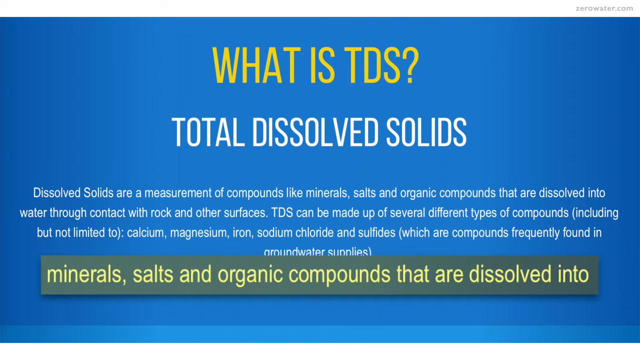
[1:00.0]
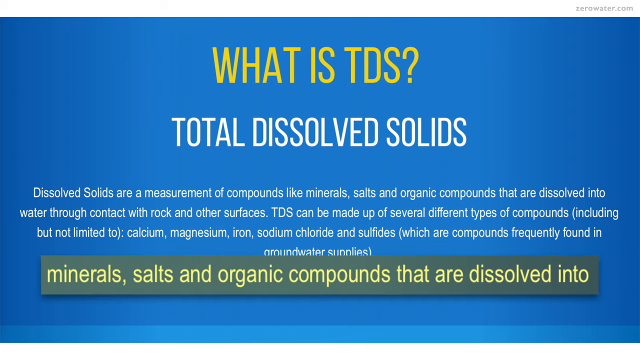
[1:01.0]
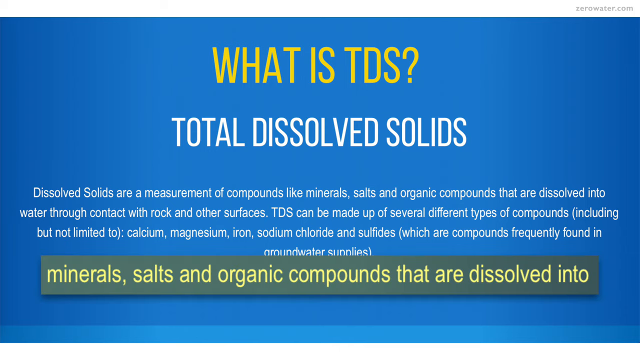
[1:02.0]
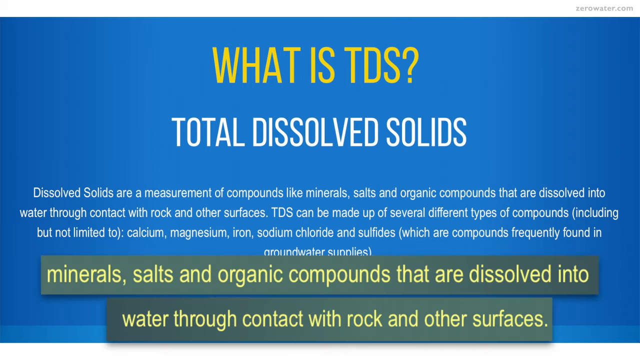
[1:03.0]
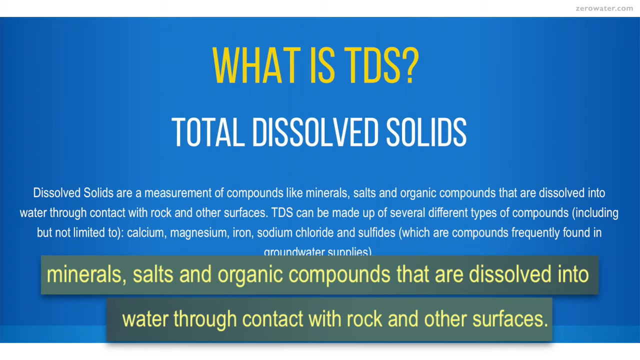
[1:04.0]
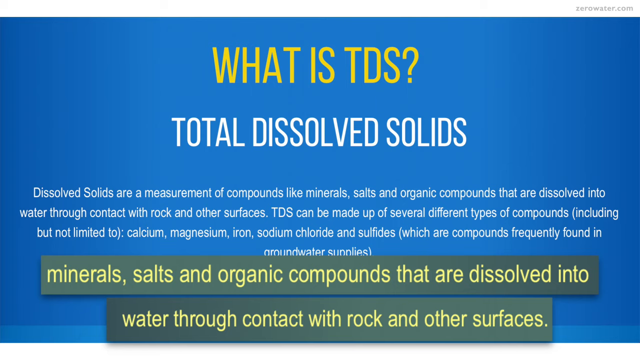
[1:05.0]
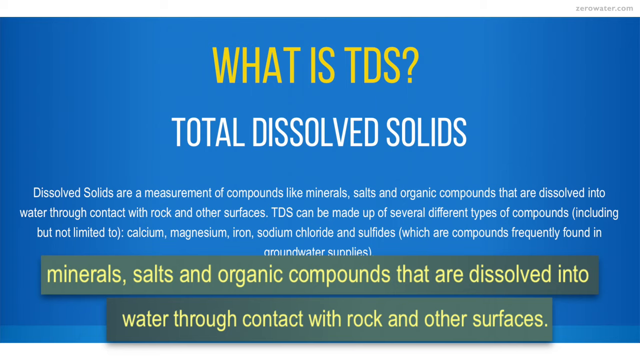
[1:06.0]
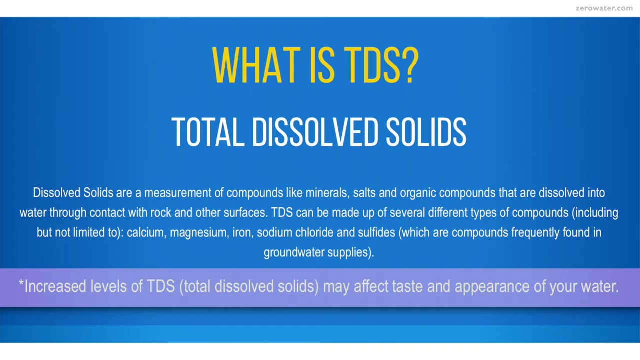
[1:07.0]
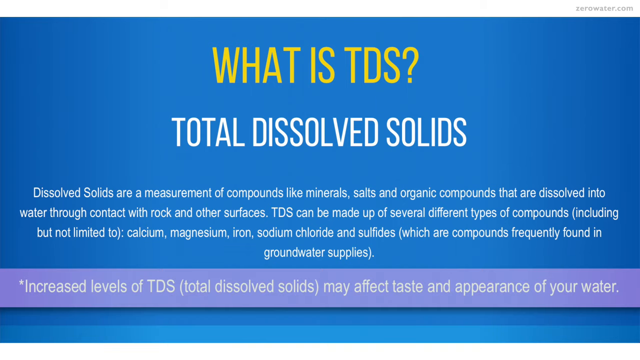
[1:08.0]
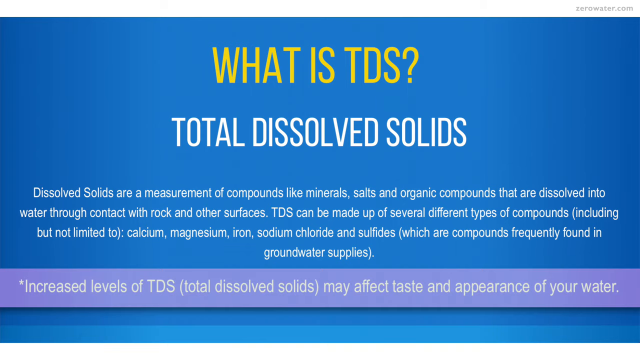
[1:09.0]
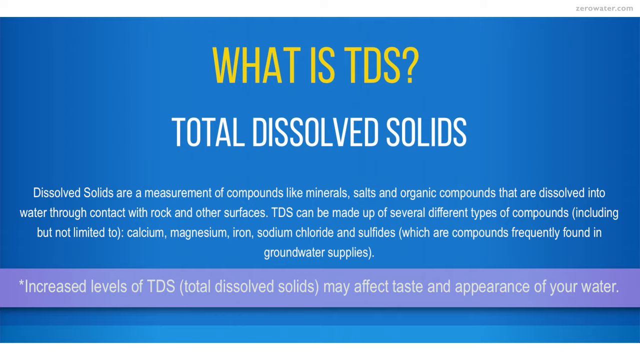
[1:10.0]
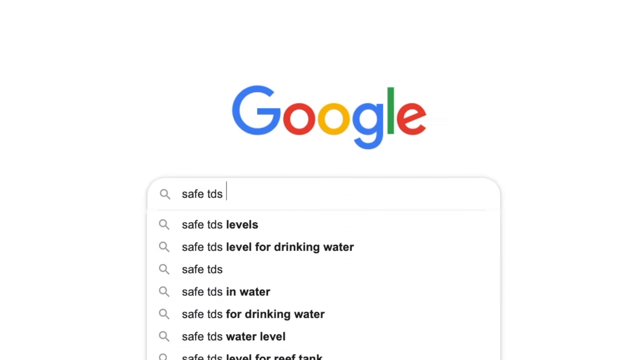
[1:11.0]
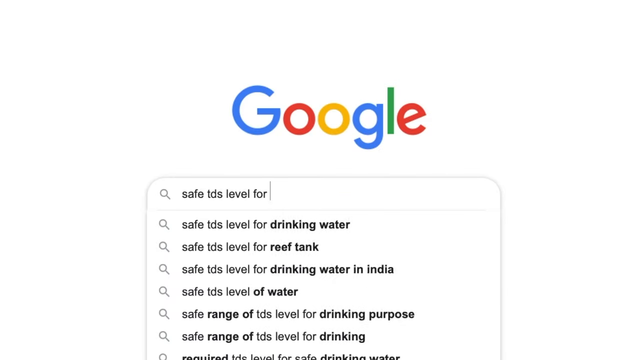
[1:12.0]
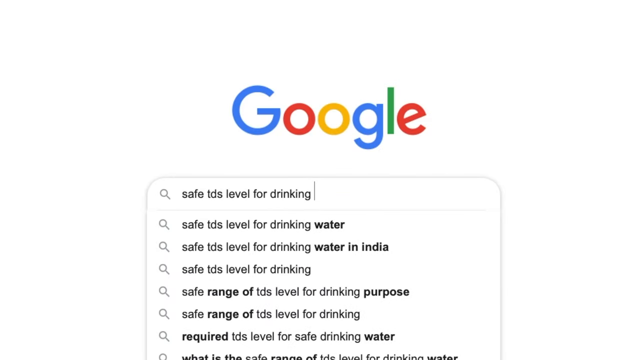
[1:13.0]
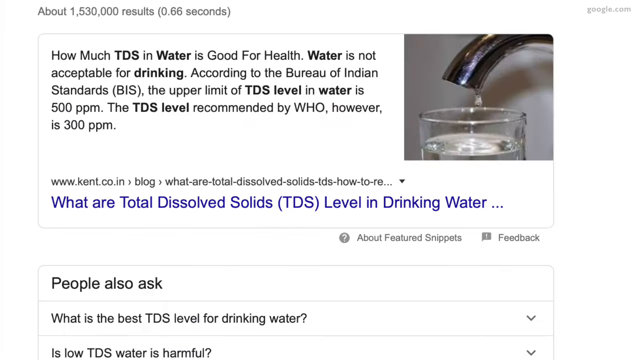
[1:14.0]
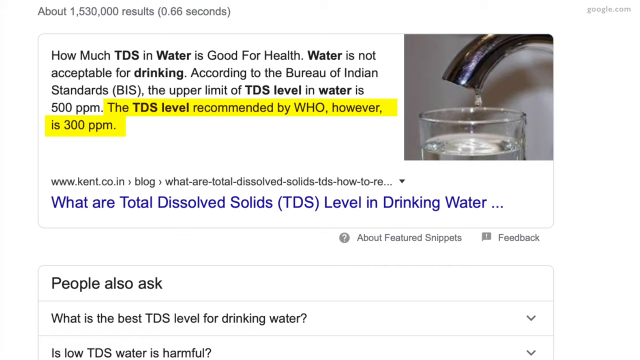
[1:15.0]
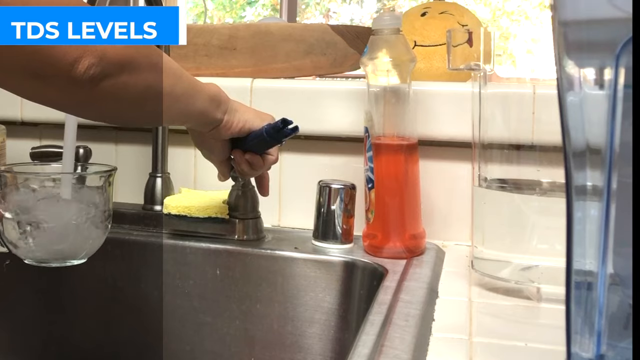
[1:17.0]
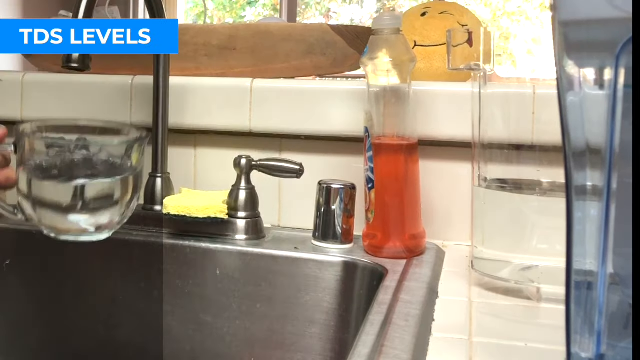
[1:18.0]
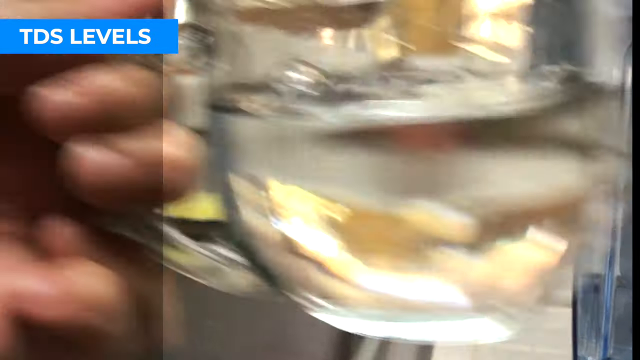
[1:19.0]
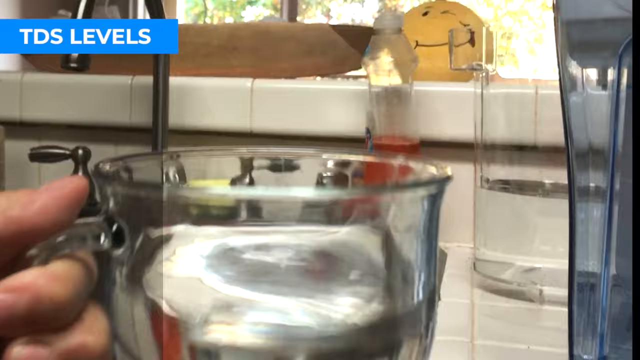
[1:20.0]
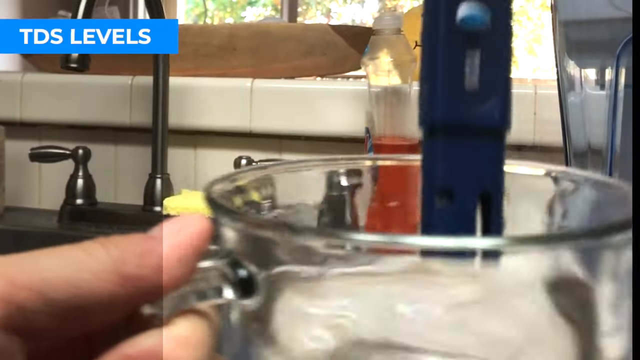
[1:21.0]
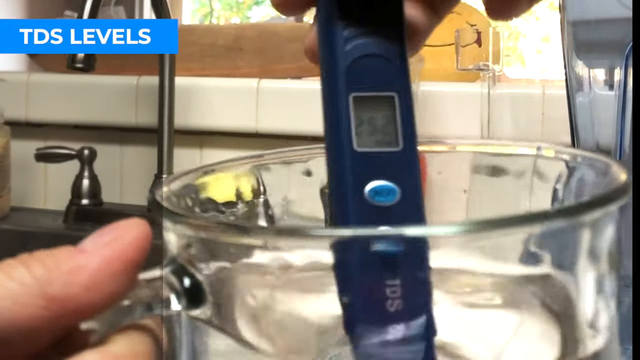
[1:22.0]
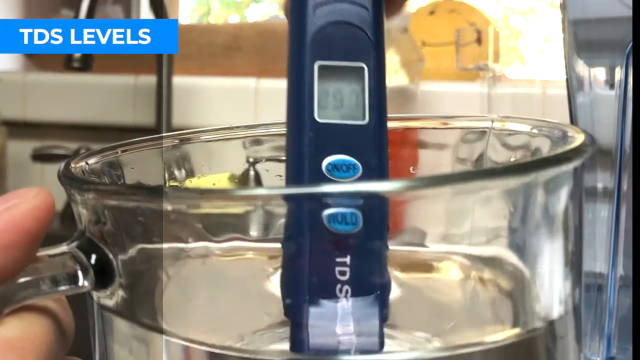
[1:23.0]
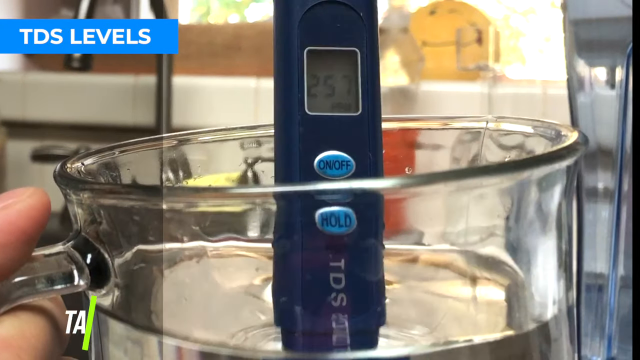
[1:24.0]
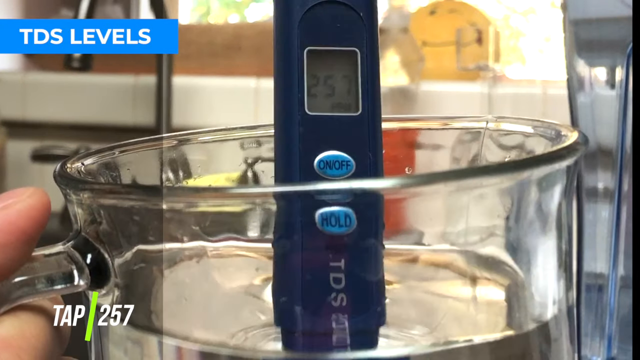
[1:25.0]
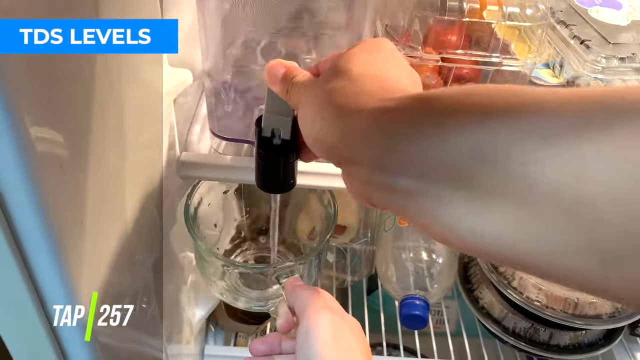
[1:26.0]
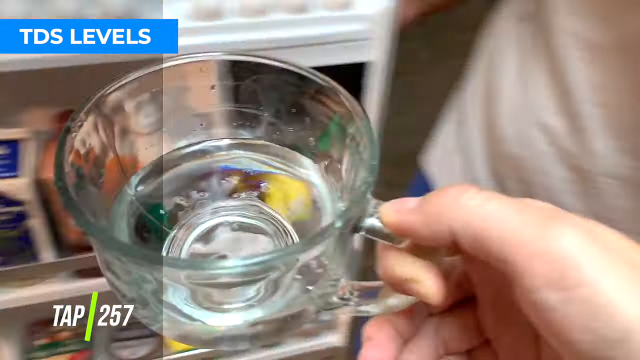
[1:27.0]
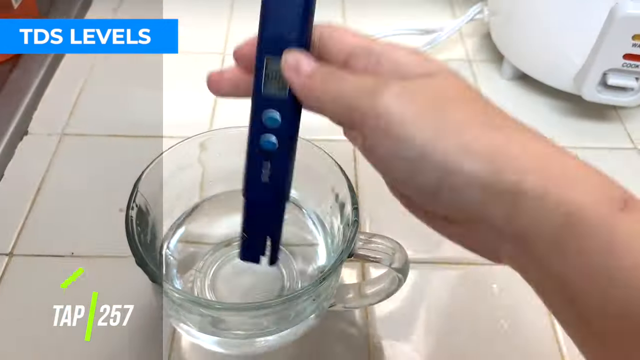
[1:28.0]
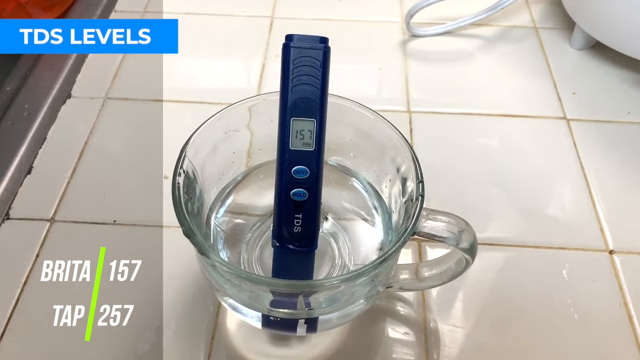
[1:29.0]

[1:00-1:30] A blue screen shows "what is TDS?" in yellow, with "Total dissolved solids" and a definition underneath: "Dissolved solids are a measurement of compound like minerals, salt, and organic compounds that are dissolved into water through contact with rocks and other surface. TDS can be made up of several different types of compound including, but not limited to, calcium, magnesium, iron, sodium chloride, and sulfate, which are compounds frequently found in groundwater supply." A Google search for "safe TDS levels for drinking water" is typed out, and the results show that the TDS level recommended by the World Health Organization is around 300 ppm. Above the highlighted message is "how much TDS in water is good for health". The results also state that water is not acceptable for drinking according to the Bureau of Indian Standards (BIS) when above the upper limit of 500 ppm TDS. A person then runs water into a glass kettle pot to test its TDS, which reads 257, and then shows the level of water purified through the filter, which reads 157.